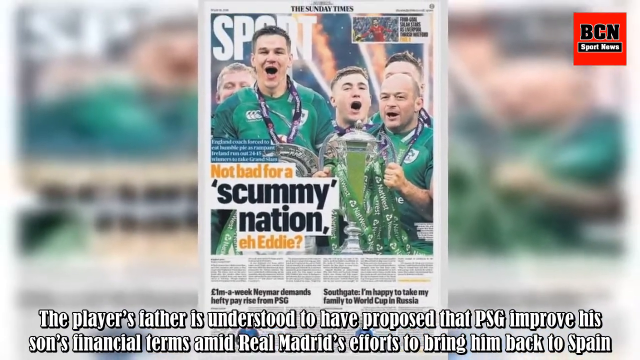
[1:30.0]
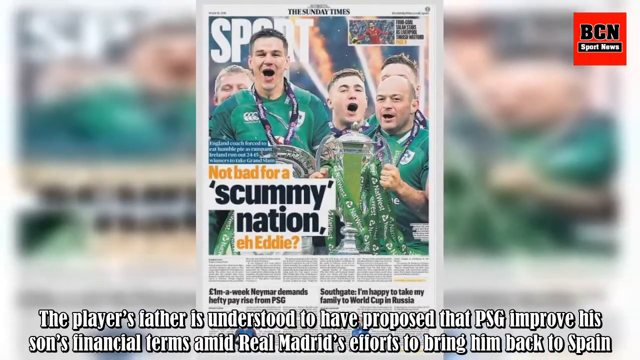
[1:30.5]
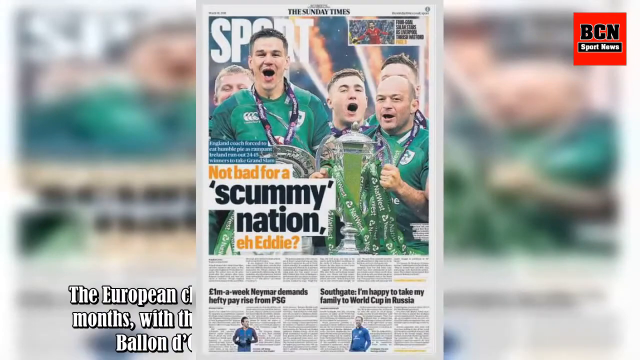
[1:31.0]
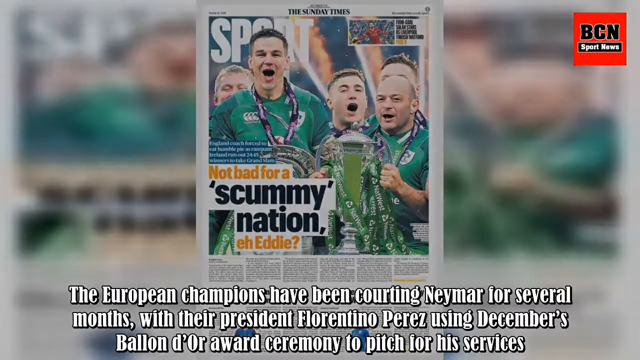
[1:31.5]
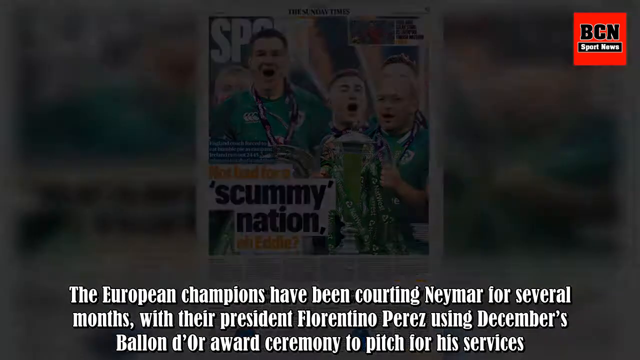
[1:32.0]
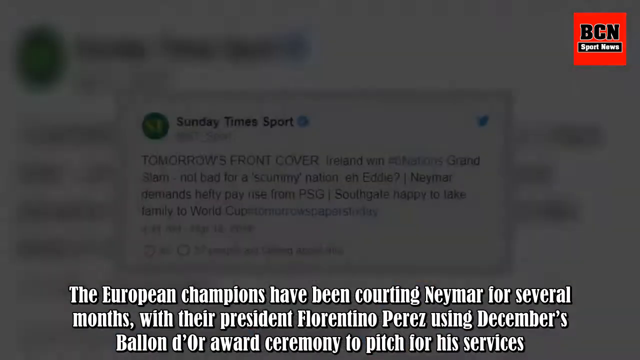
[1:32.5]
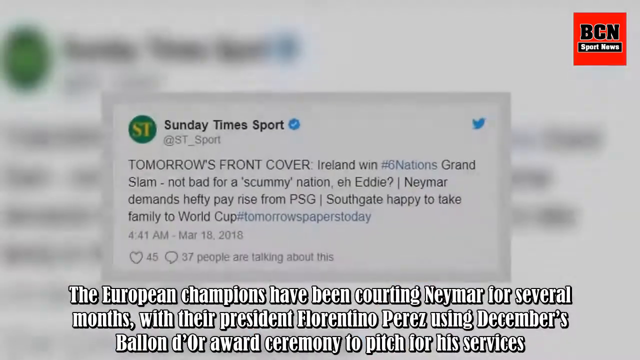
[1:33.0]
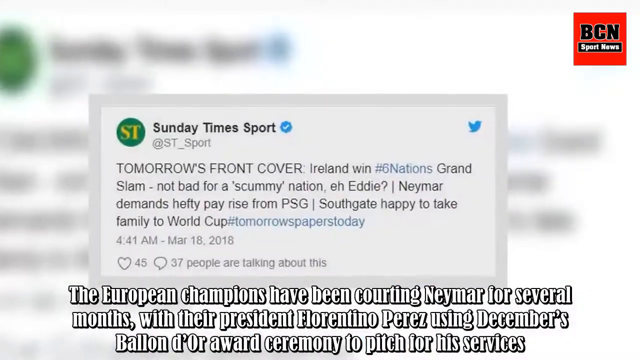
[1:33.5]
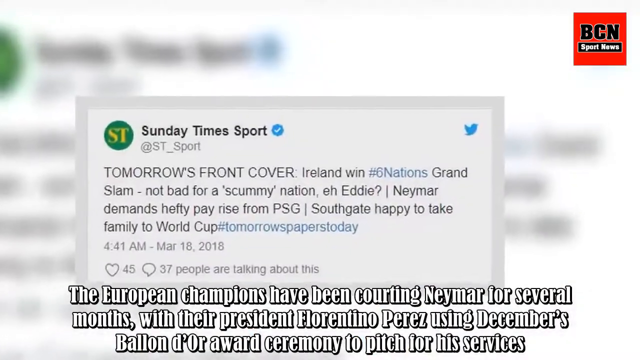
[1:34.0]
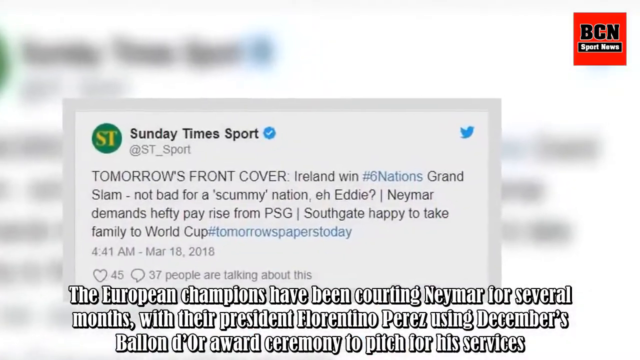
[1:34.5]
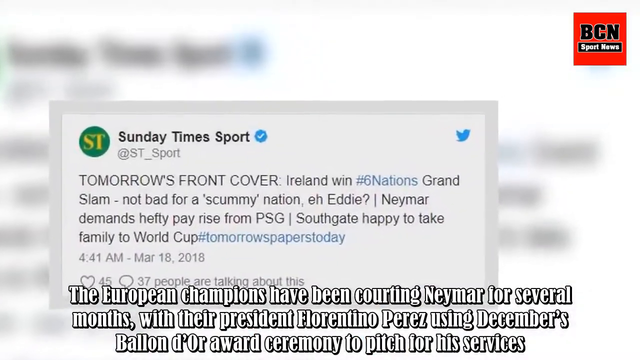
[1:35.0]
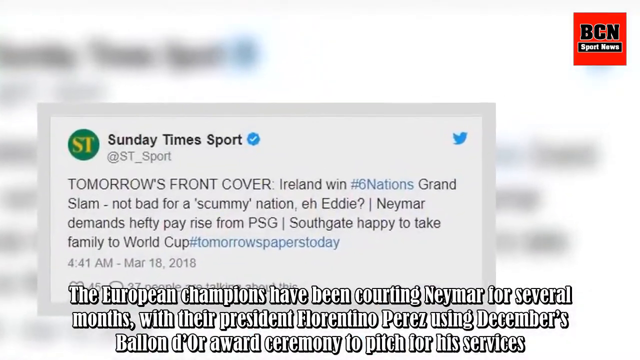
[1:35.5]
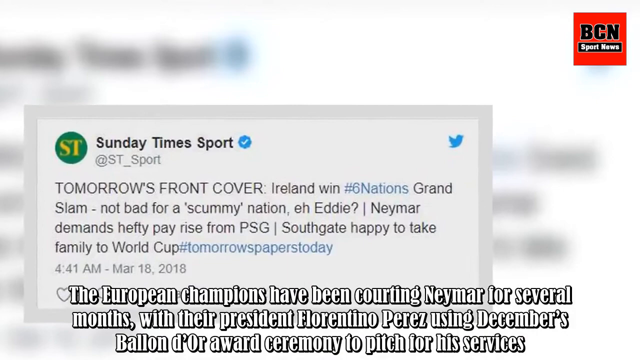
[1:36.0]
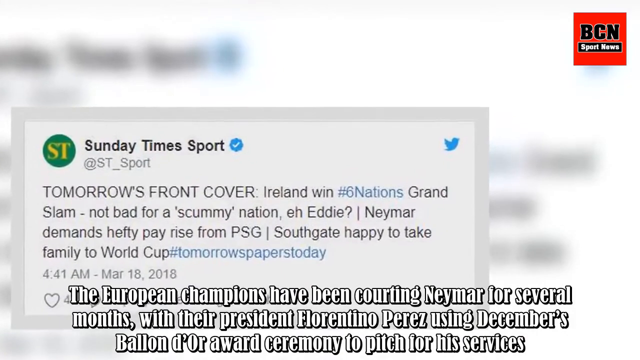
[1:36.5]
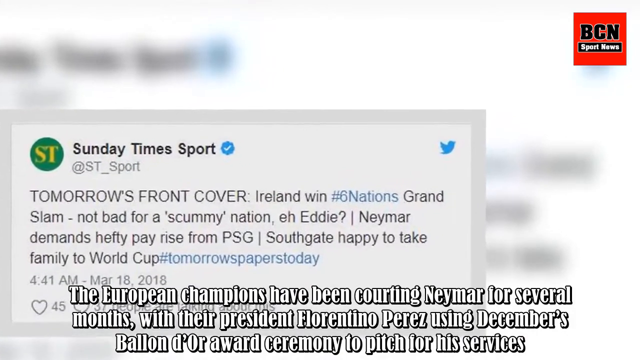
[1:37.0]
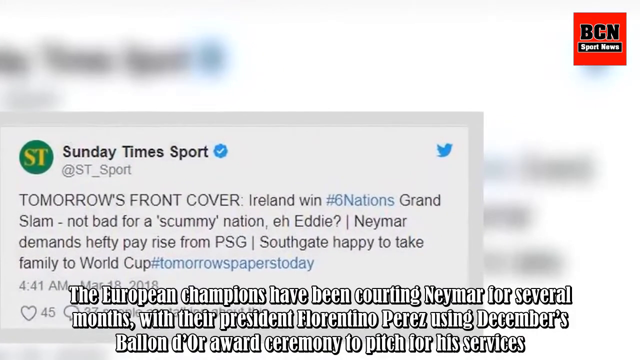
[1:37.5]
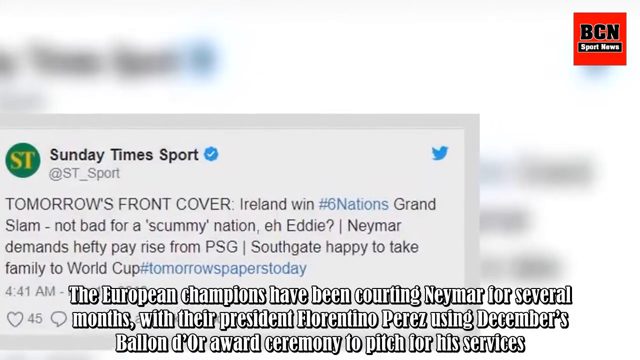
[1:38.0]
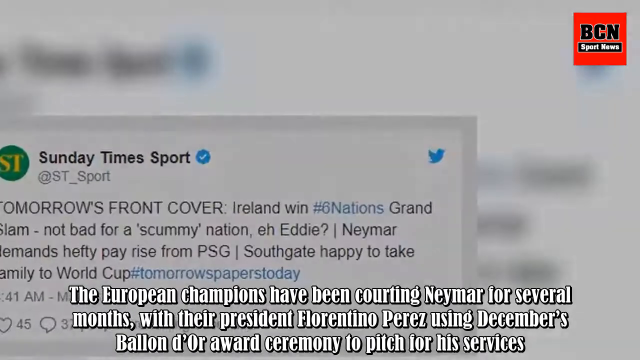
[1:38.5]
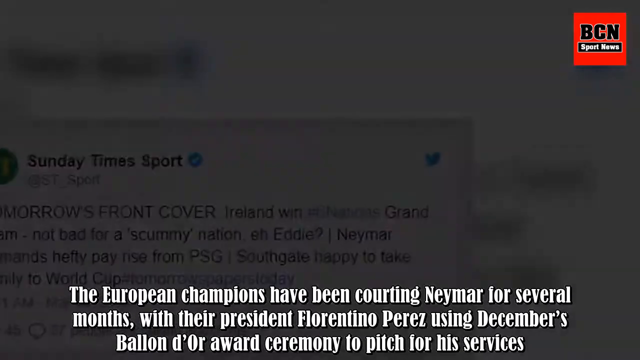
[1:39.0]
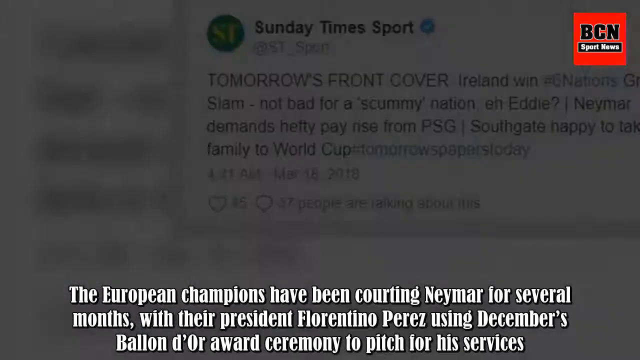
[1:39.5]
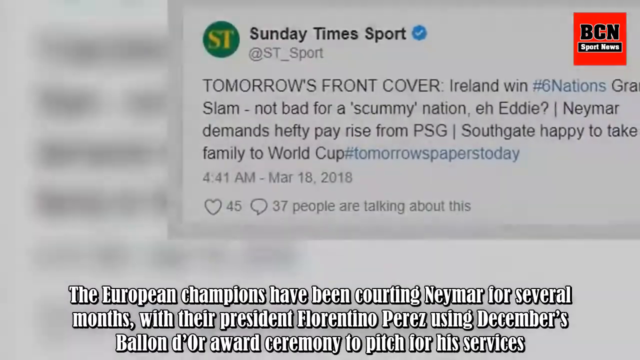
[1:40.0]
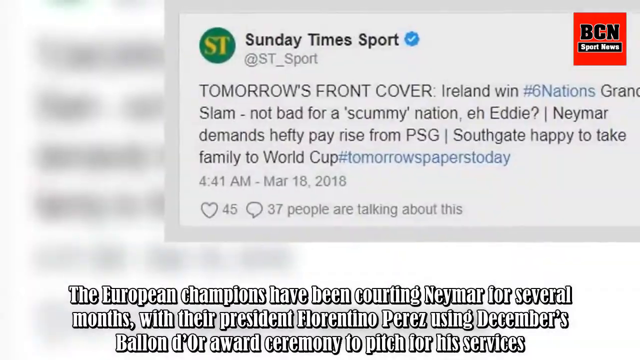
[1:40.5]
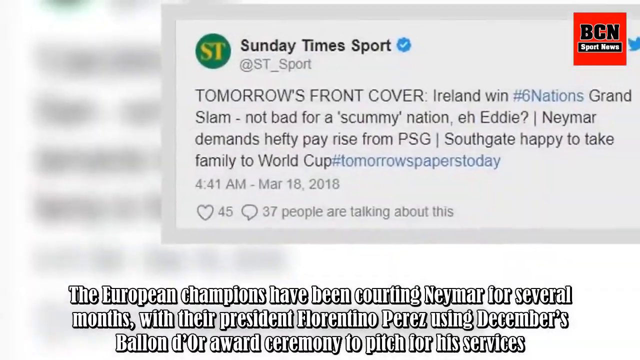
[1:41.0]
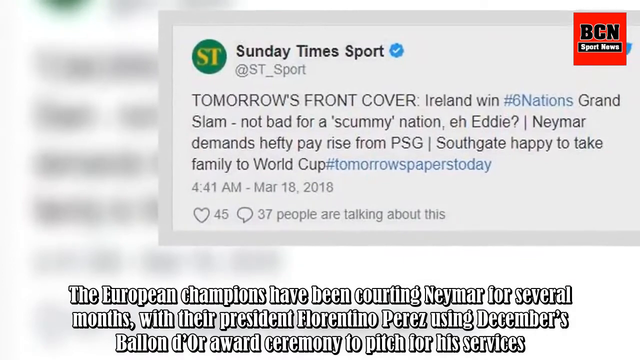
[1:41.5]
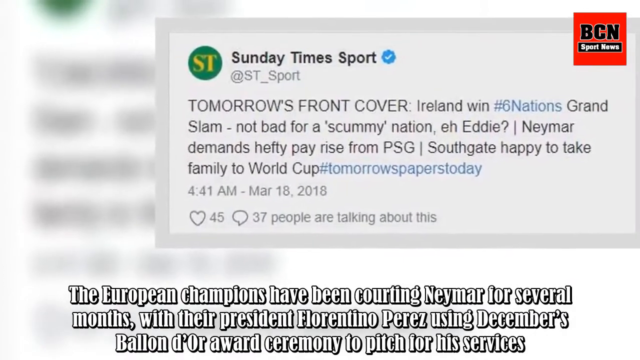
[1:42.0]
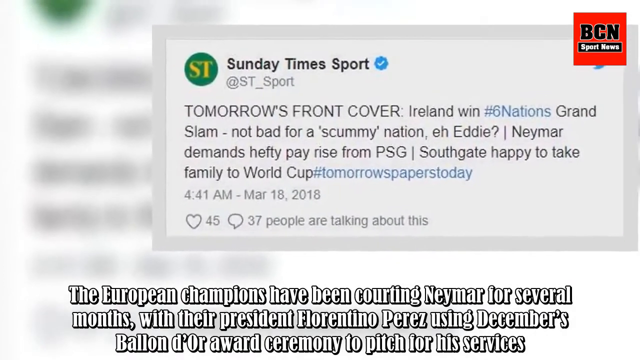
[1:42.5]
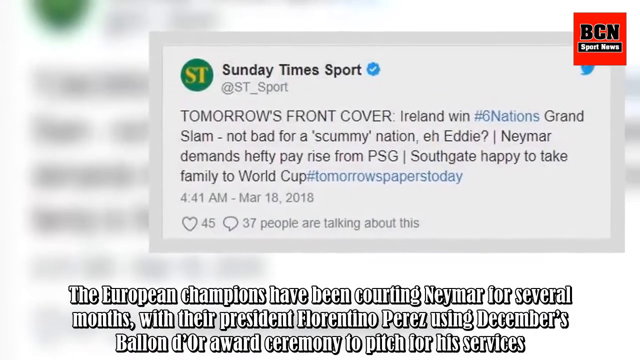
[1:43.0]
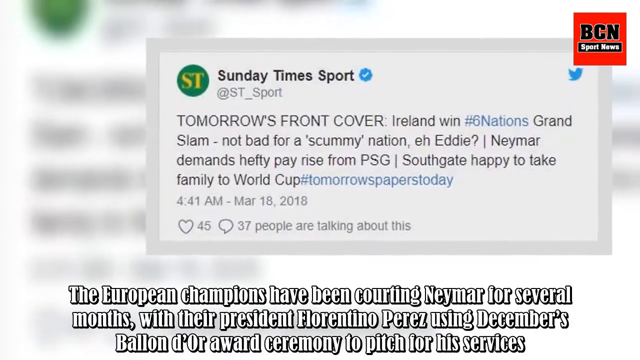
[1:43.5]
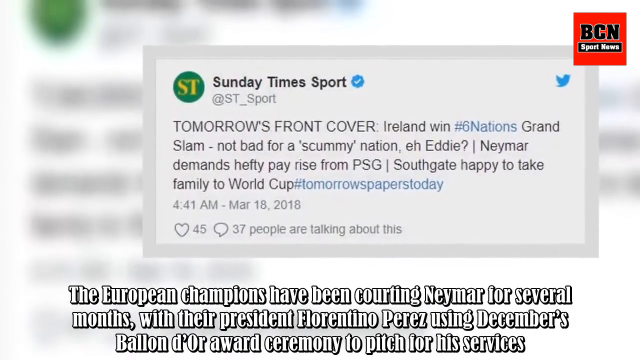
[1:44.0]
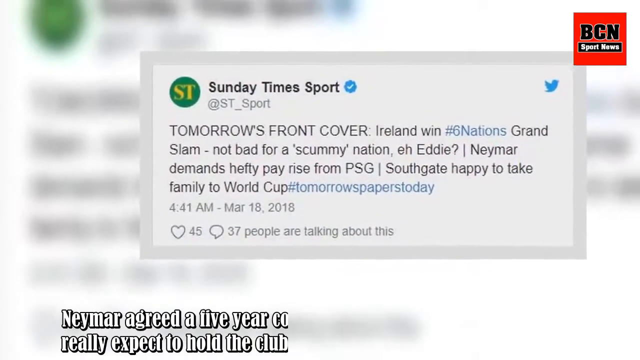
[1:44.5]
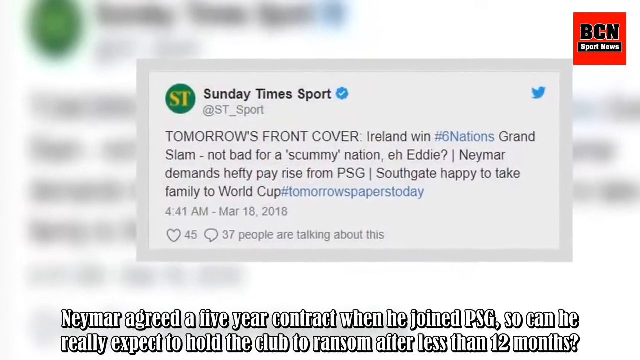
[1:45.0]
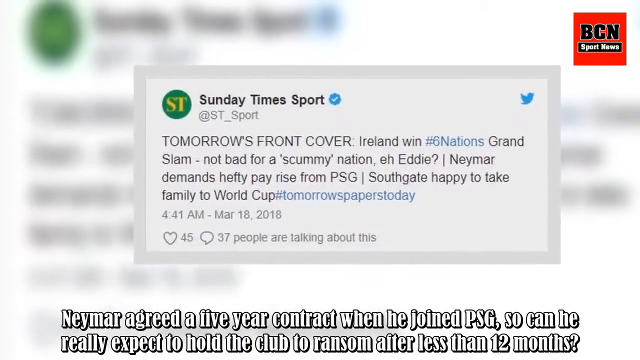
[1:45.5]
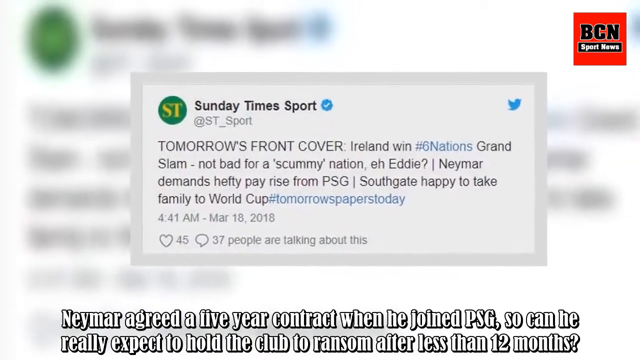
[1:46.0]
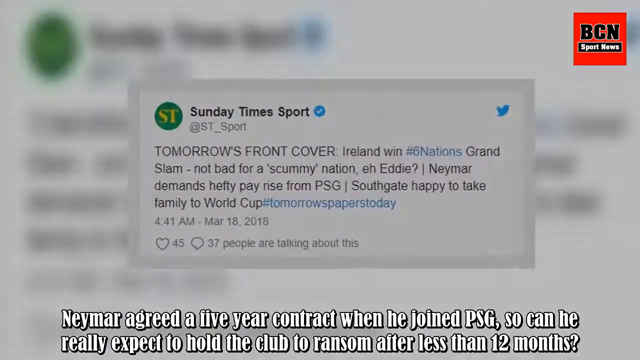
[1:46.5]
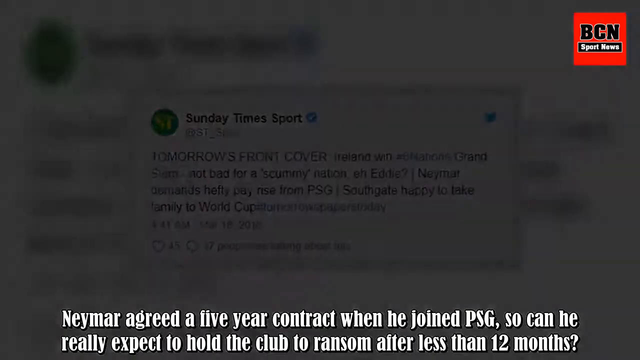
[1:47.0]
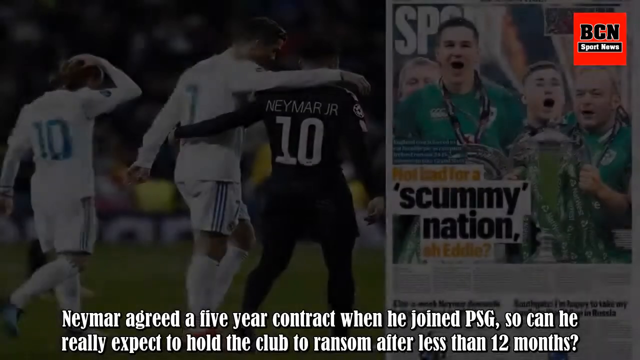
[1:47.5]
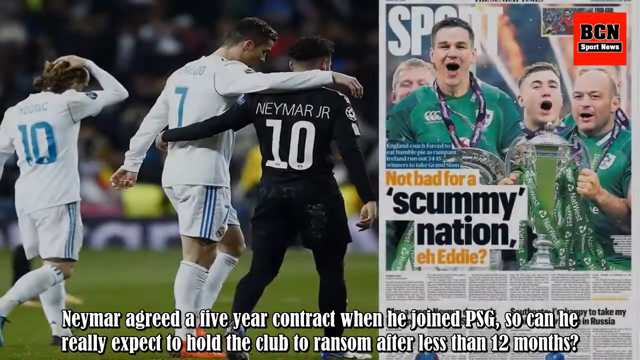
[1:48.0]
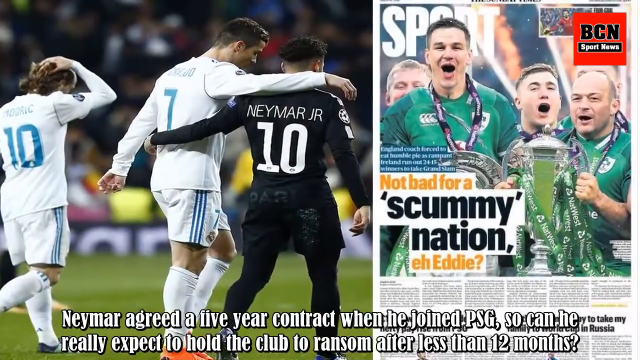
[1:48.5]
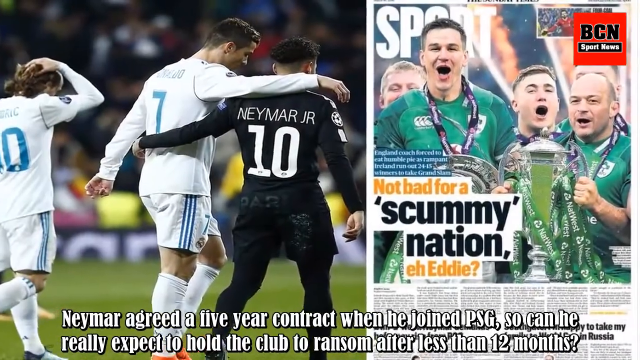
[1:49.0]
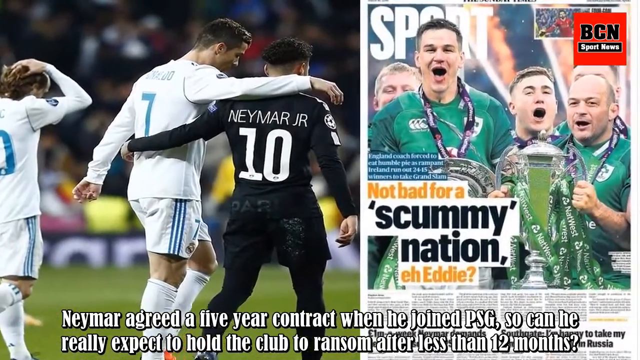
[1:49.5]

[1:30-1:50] Text at the bottom says "the player's father is understood to have proposed that PSG improve his son's financial terms amid Real Madrid's efforts to bring him back to Spain." It changes to other text at the very bottom: "the European champions have been courting Neymar for several months, with their president, Florentin Perez, using December's Ballon d'Or ceremony to pitch for his services." A screenshot shows a tweet by the Sunday Times Sport, verified with a blue checkmark, that says "Tomorrow's front cover, Ireland win, #six nations" and "not bad for a scummy nation". It also says "Neymar demands happy pay rise from PSG. Southgate happy to take family to World Cup. #tomorrow's paper's day today". It was posted at 4.41 AM on March 18, 2018. Below it in gray are a heart icon with 45 likes and, to the right, 37 comments, along with text saying "people are talking about this".